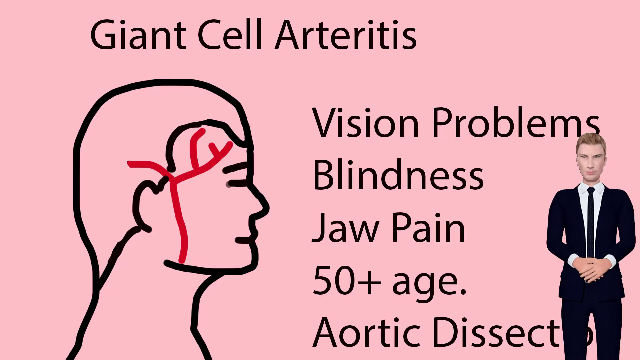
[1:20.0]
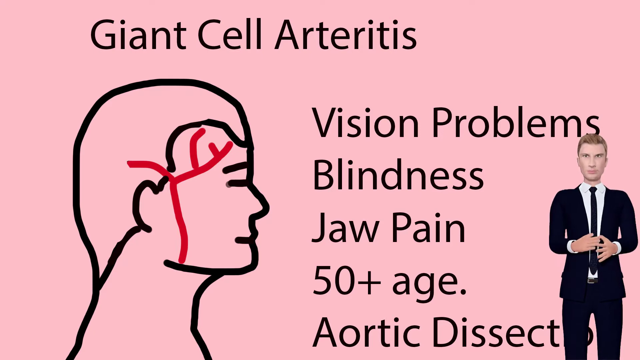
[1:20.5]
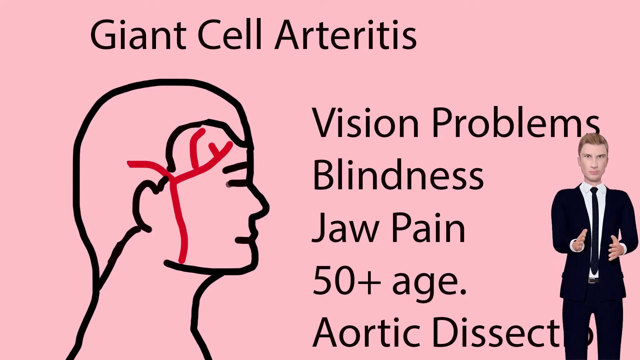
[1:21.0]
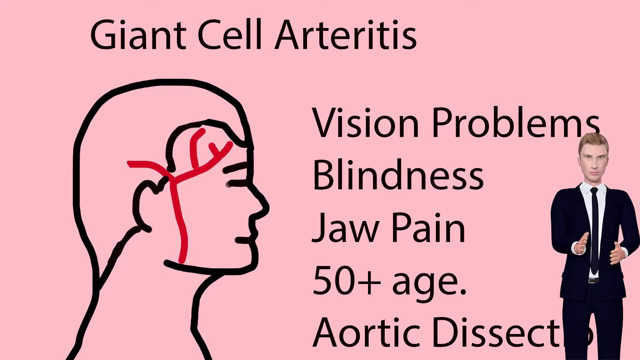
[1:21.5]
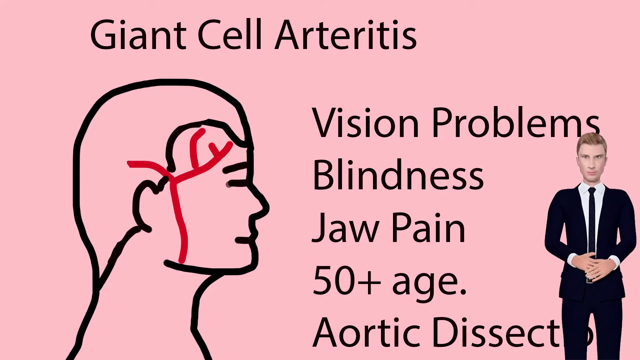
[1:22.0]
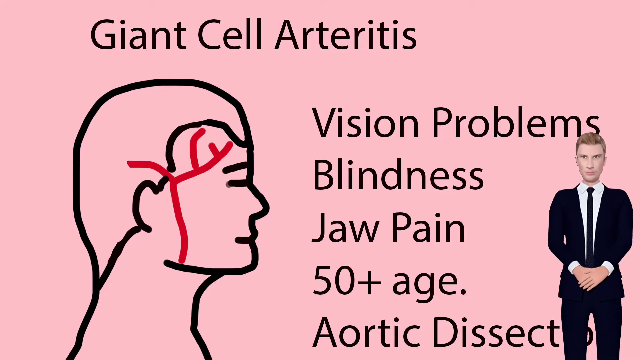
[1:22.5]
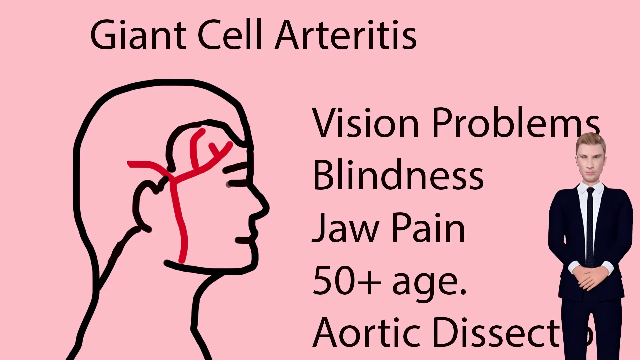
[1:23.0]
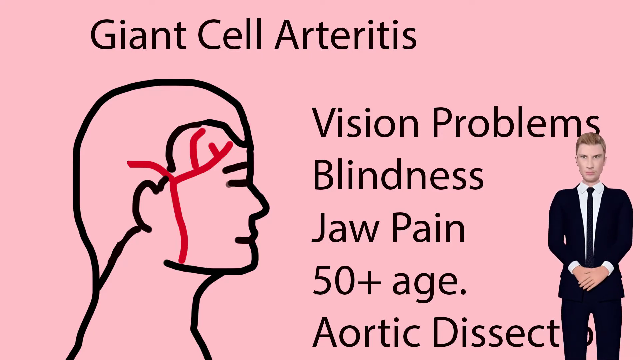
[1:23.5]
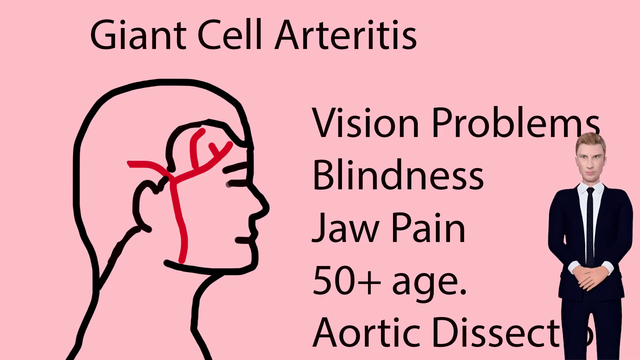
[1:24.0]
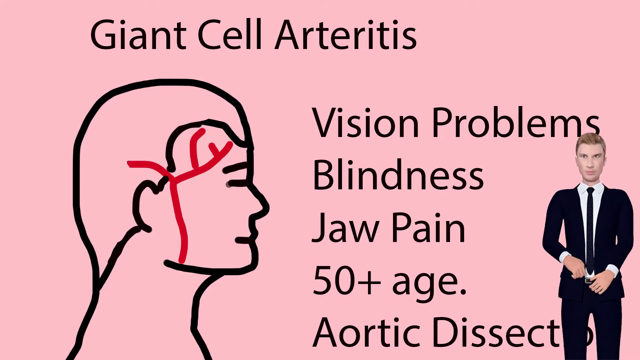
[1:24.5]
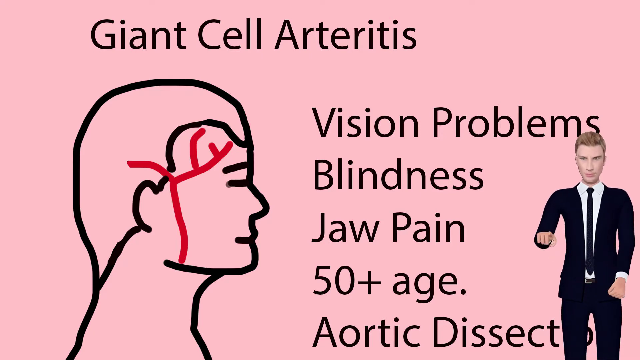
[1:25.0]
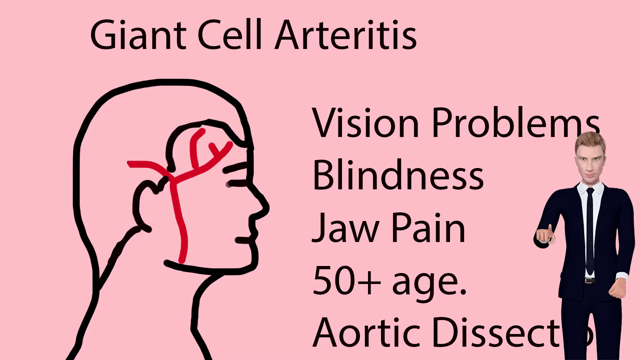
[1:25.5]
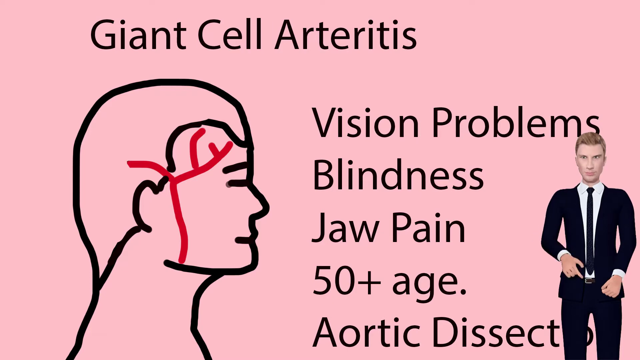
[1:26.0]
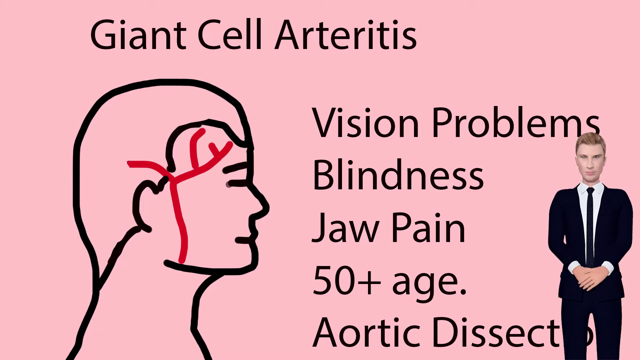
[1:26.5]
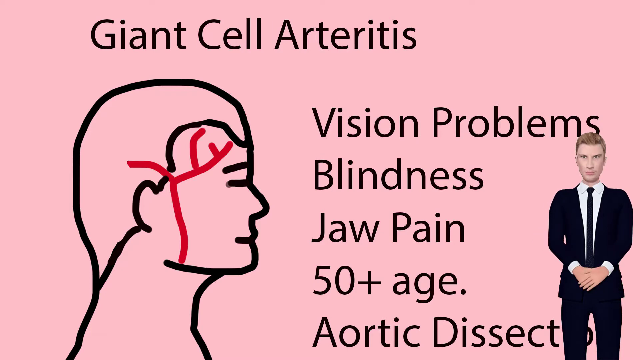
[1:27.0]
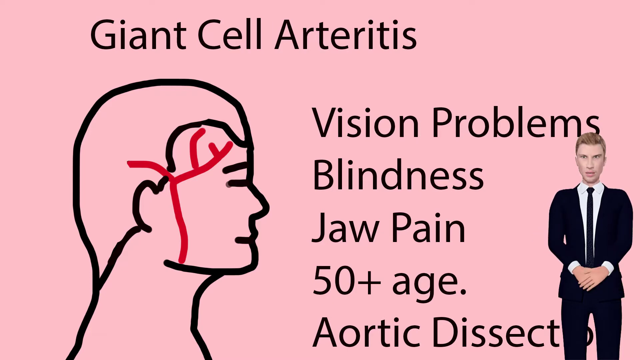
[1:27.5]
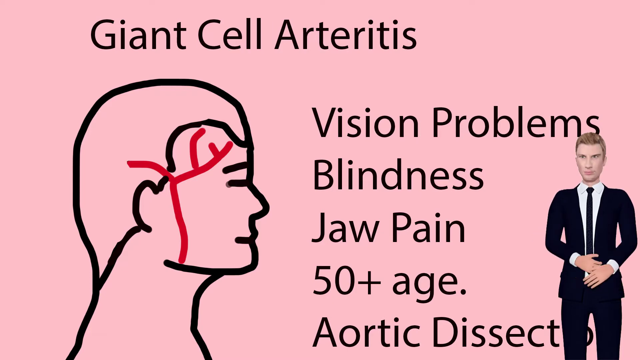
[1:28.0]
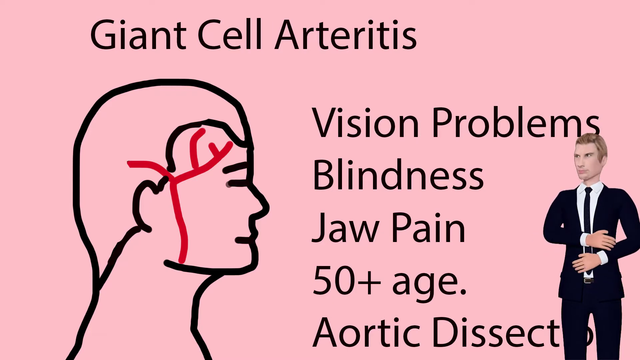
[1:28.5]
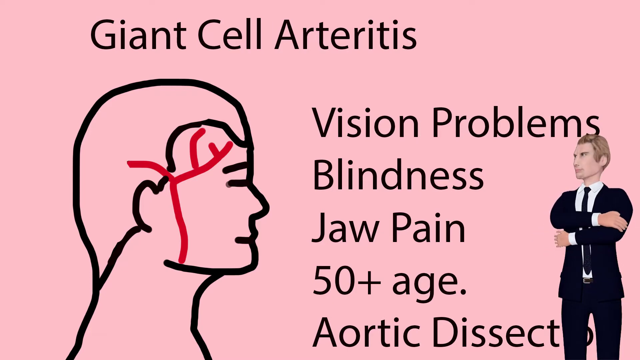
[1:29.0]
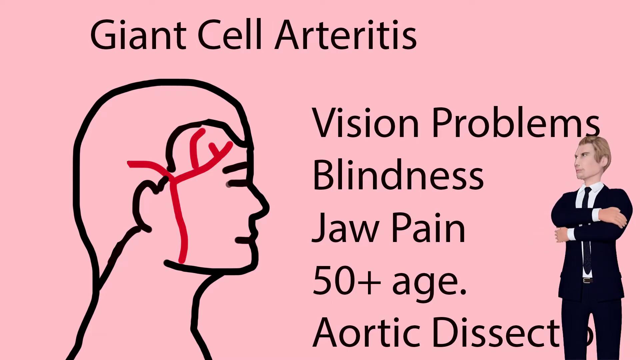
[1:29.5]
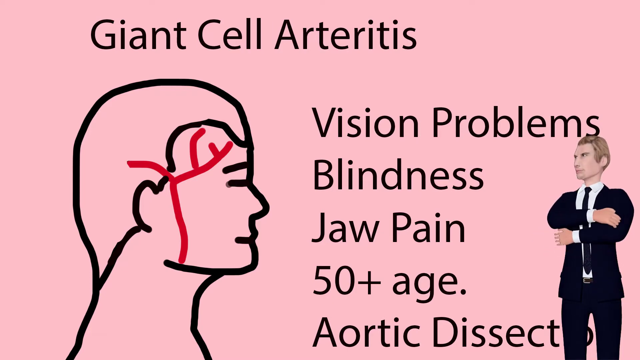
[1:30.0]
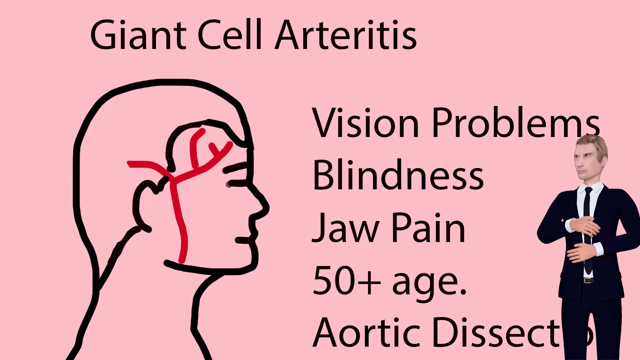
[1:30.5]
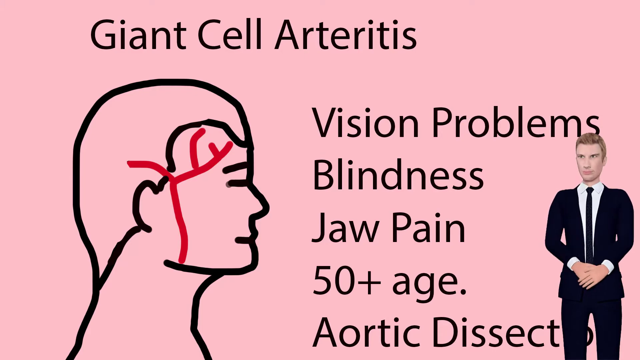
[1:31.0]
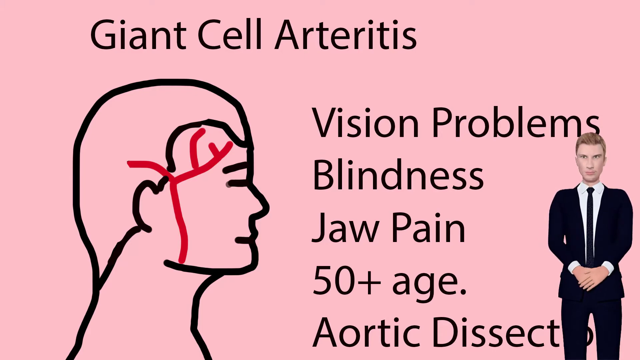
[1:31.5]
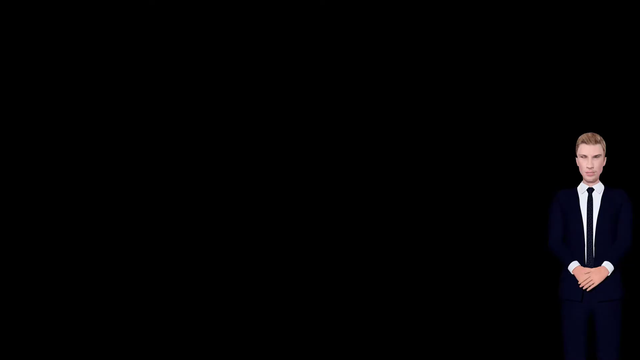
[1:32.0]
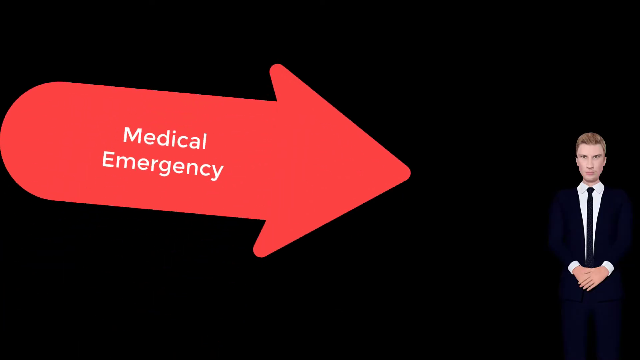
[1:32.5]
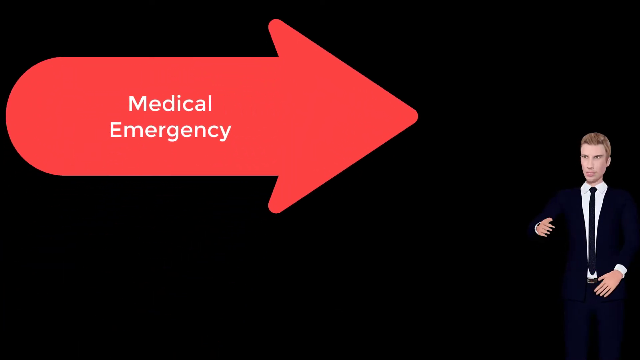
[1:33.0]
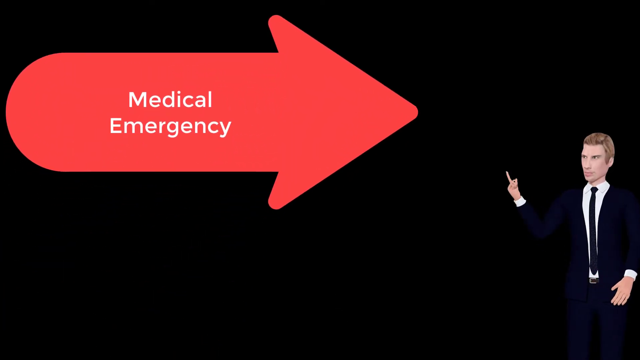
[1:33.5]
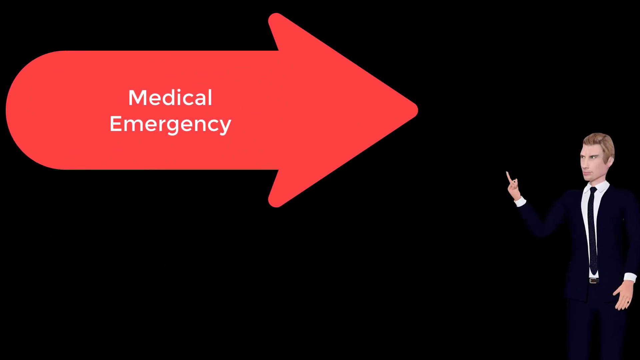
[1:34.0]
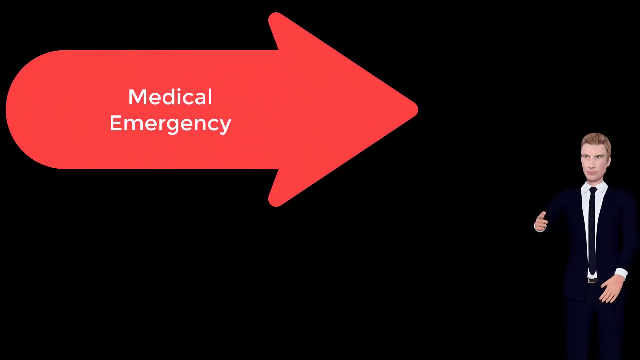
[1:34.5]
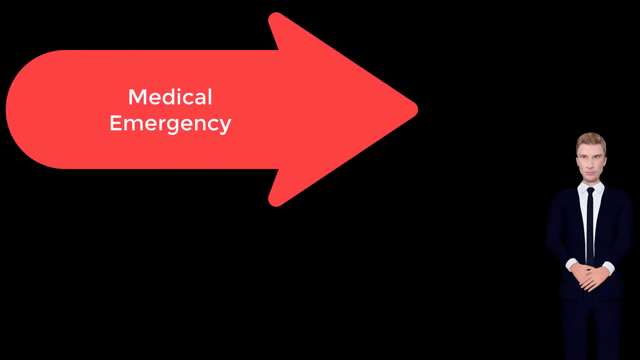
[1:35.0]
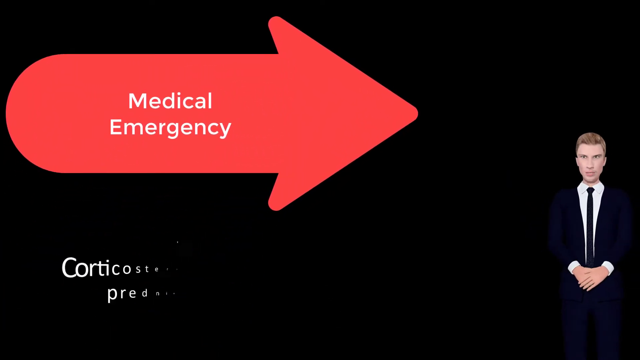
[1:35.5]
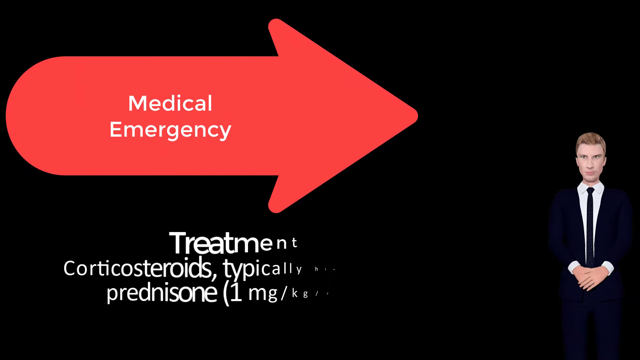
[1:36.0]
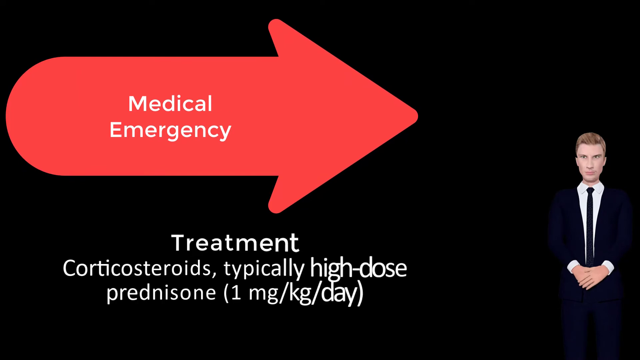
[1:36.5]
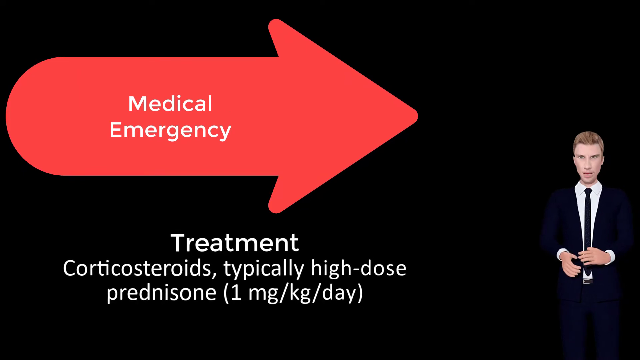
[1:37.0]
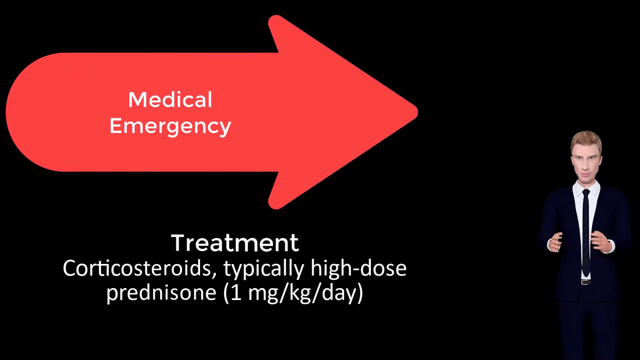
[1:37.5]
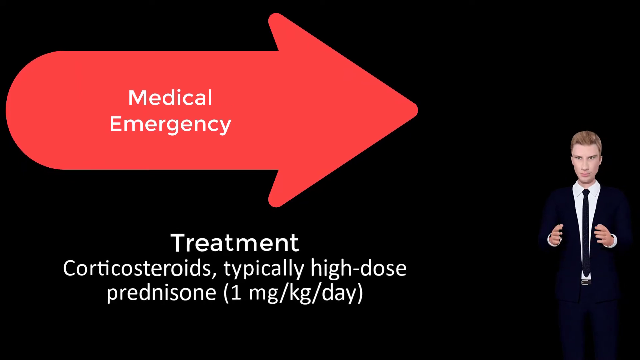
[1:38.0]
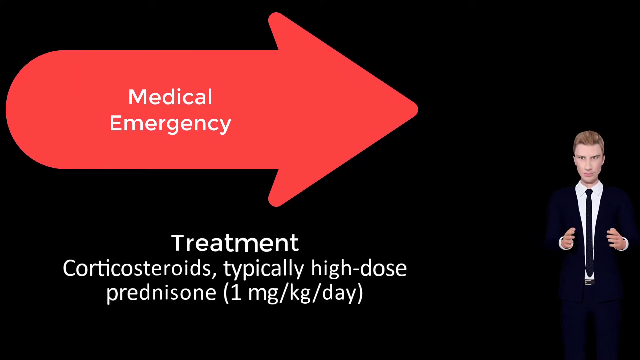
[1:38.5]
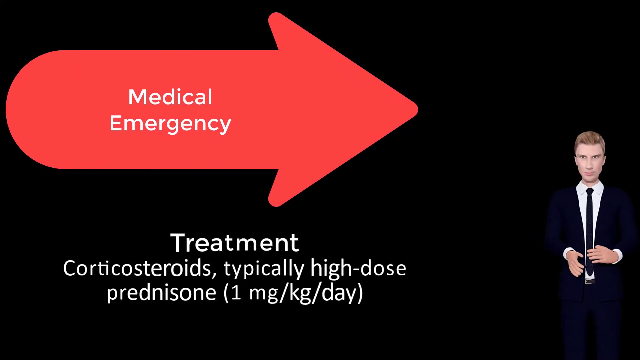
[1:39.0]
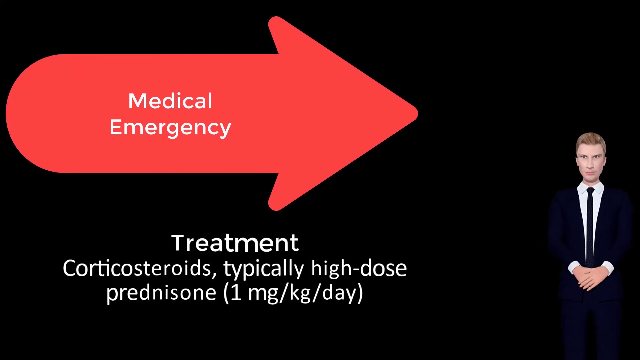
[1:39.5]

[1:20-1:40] A list for giant cell arteritis shows vision problems, blindness, being above age 50, and aortic dissection. A cartoon diagram shows the arteries on one side of a person's head. Text reads "medical emergency" and refers to treatment with steroids, and then to corticosteroids and prednisone at one milligram per kilogram per day.